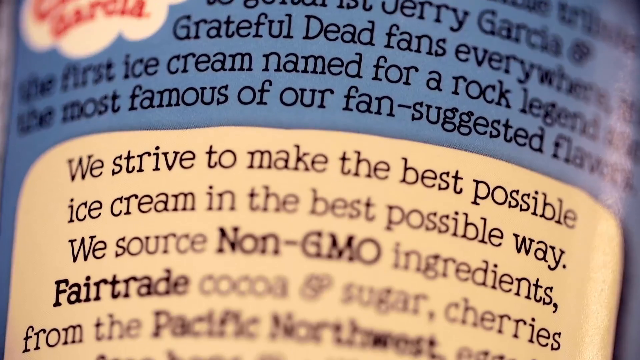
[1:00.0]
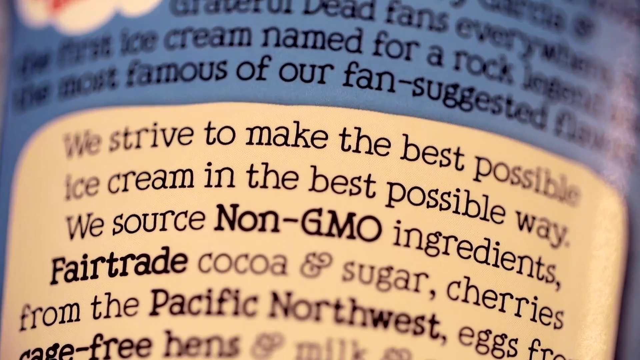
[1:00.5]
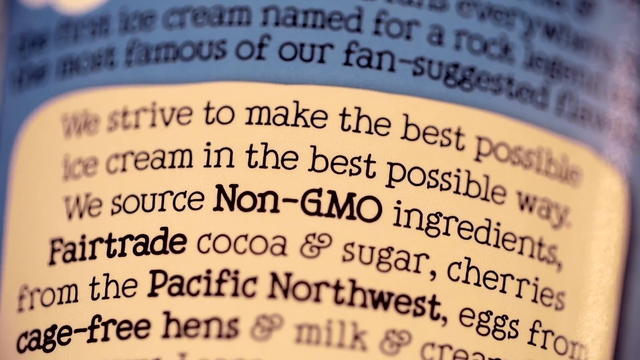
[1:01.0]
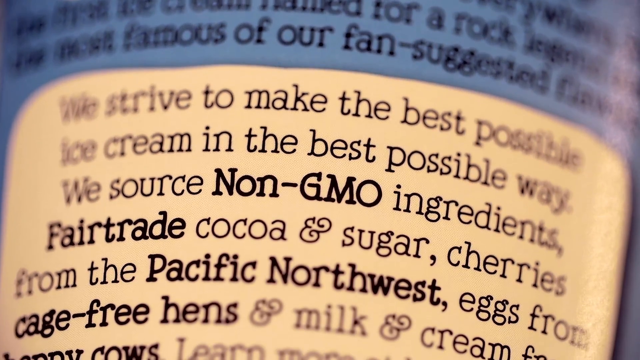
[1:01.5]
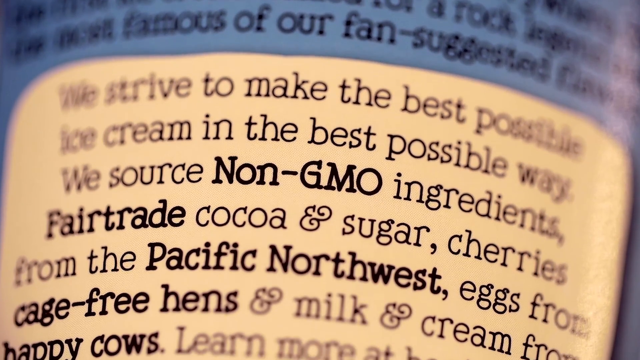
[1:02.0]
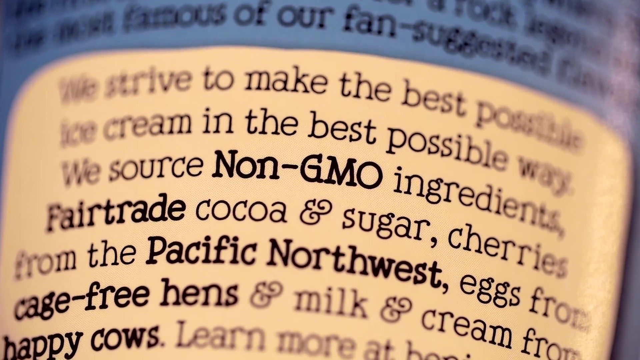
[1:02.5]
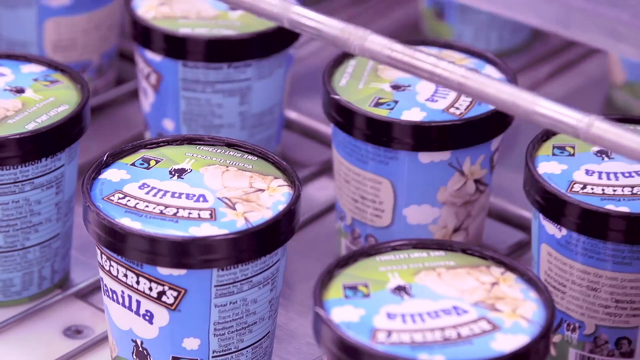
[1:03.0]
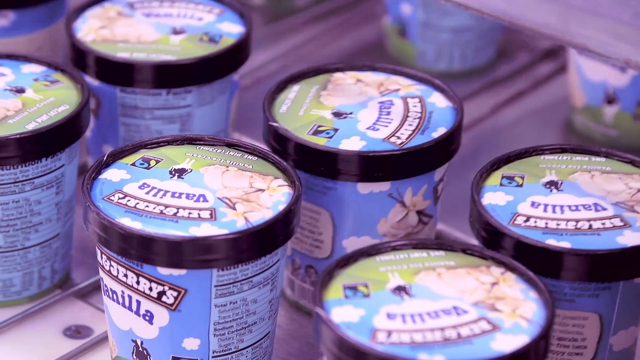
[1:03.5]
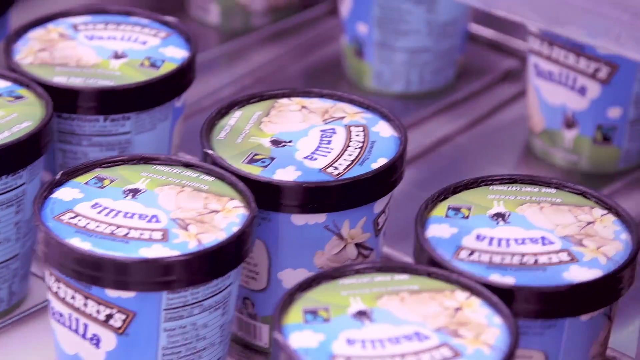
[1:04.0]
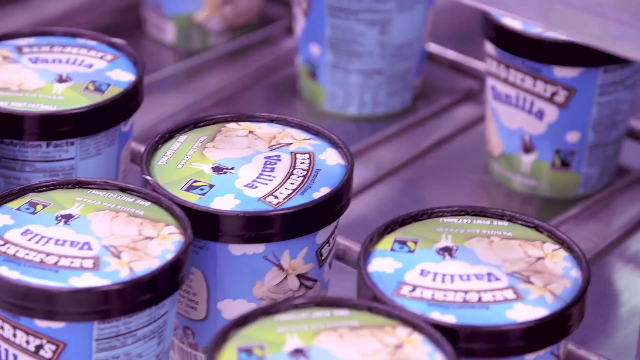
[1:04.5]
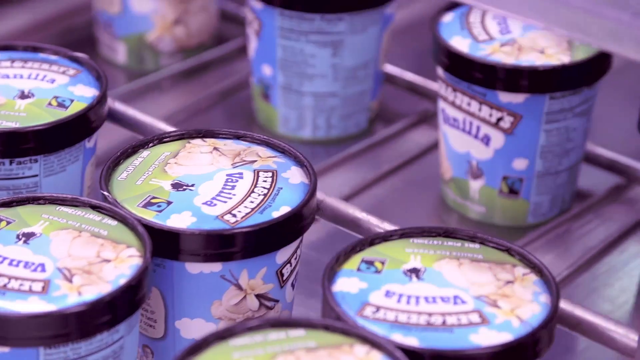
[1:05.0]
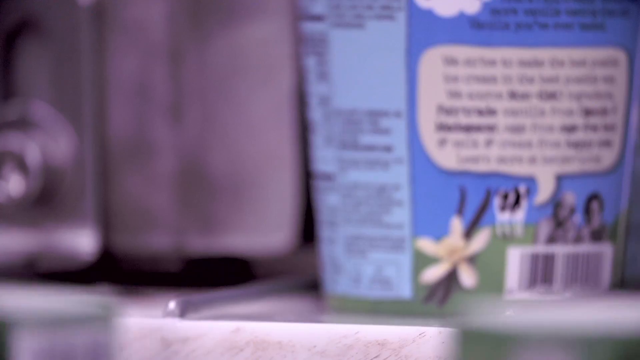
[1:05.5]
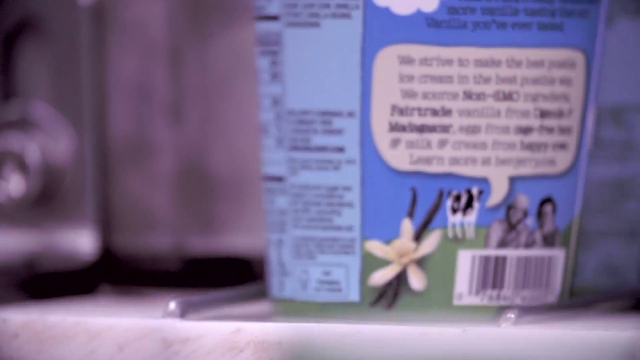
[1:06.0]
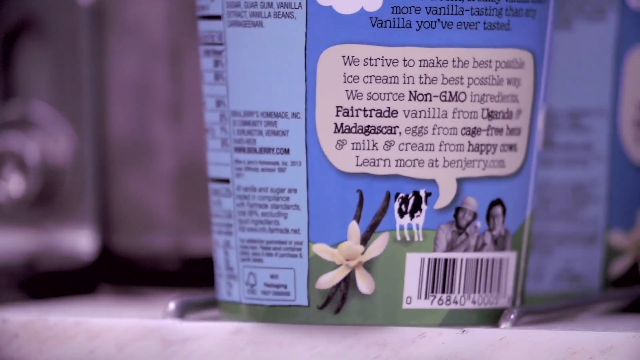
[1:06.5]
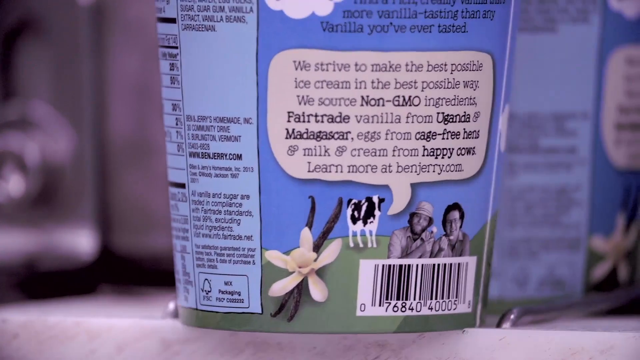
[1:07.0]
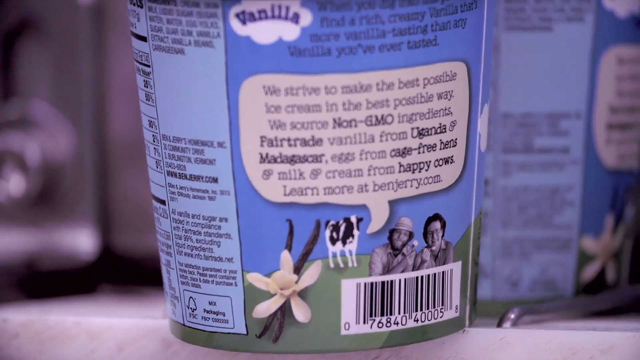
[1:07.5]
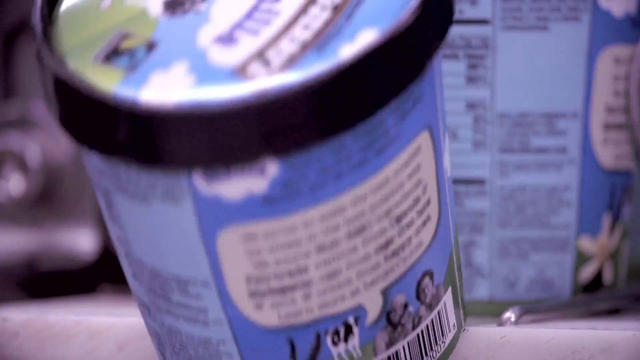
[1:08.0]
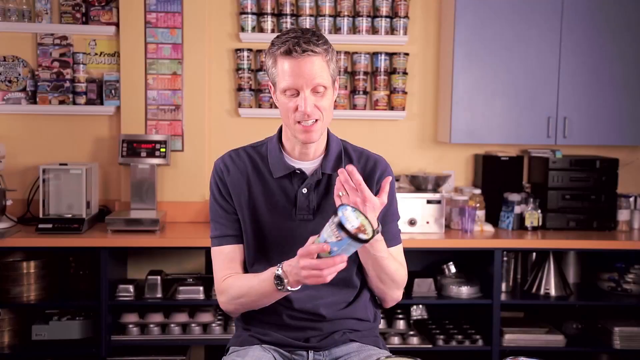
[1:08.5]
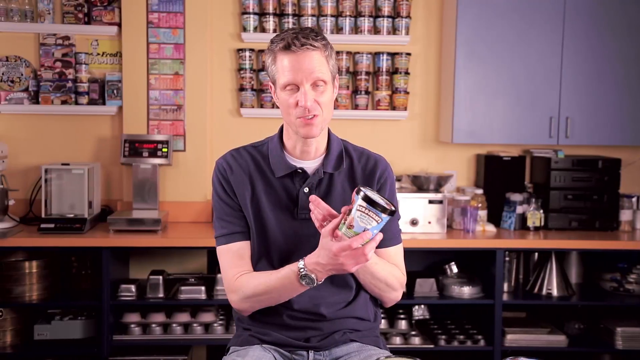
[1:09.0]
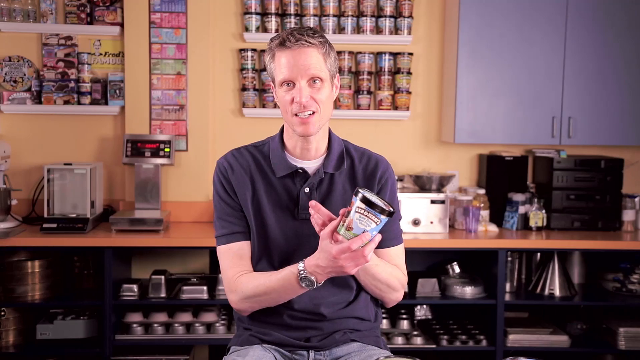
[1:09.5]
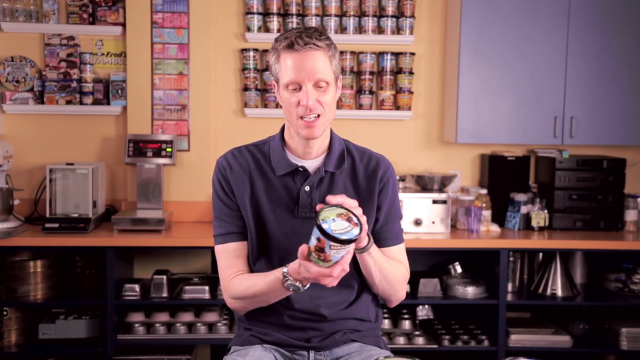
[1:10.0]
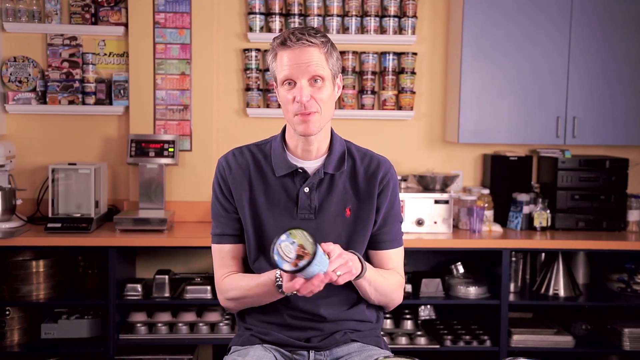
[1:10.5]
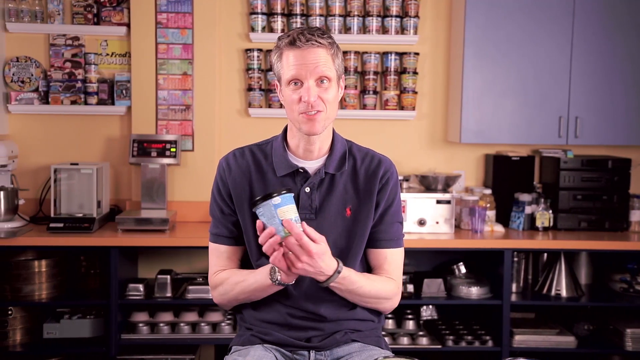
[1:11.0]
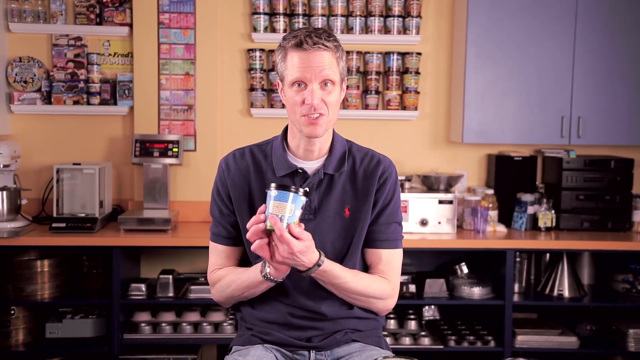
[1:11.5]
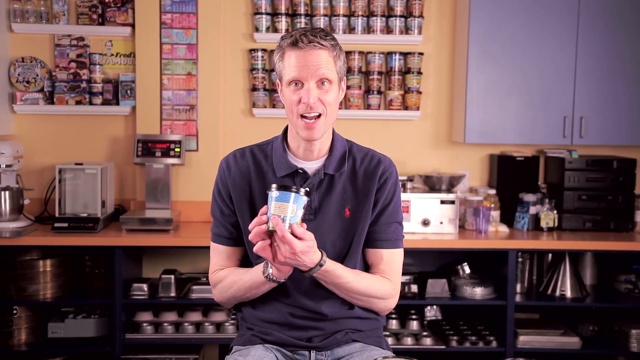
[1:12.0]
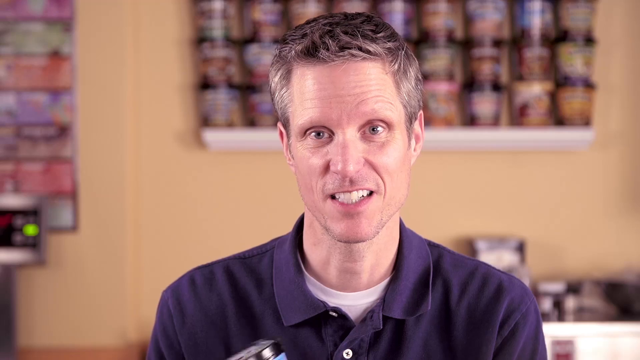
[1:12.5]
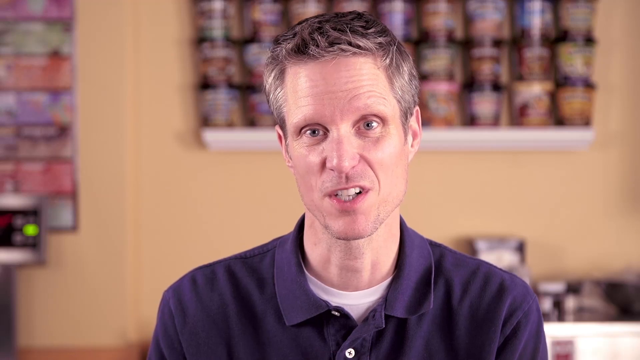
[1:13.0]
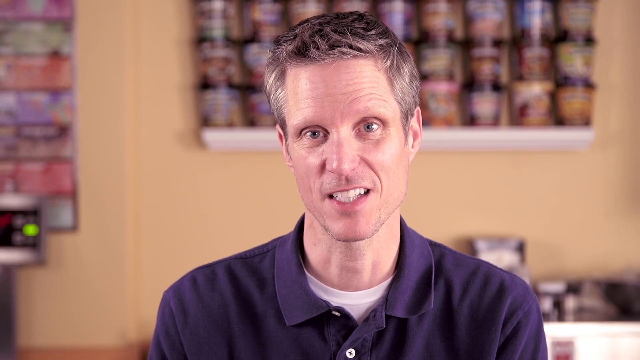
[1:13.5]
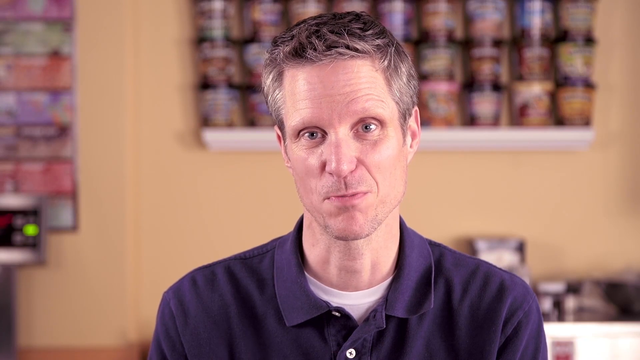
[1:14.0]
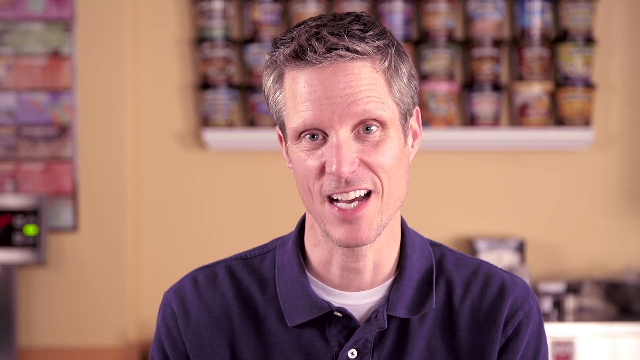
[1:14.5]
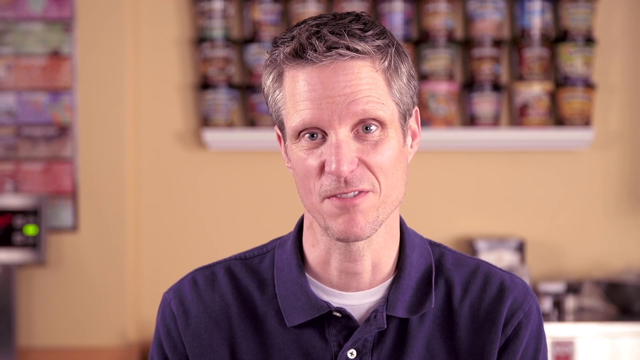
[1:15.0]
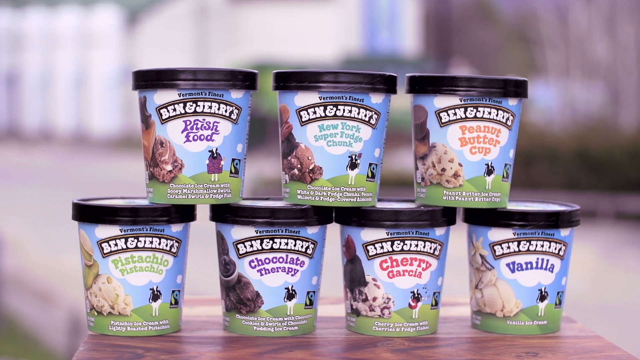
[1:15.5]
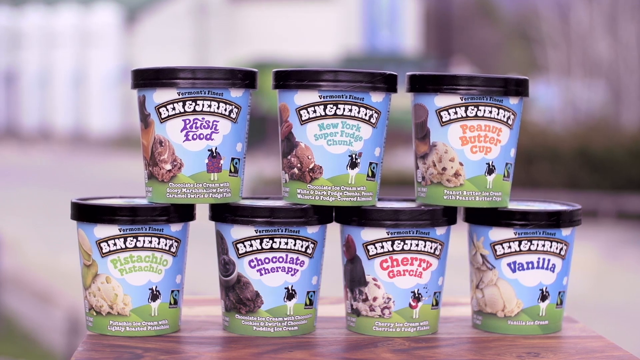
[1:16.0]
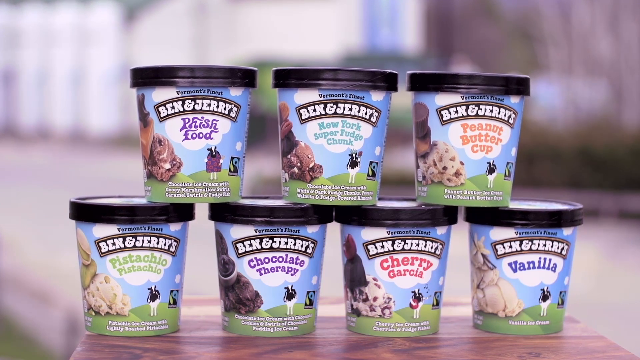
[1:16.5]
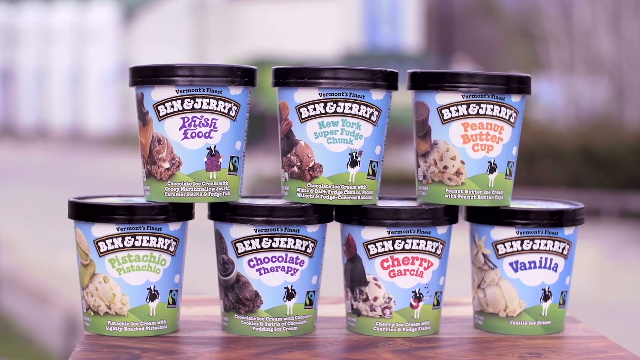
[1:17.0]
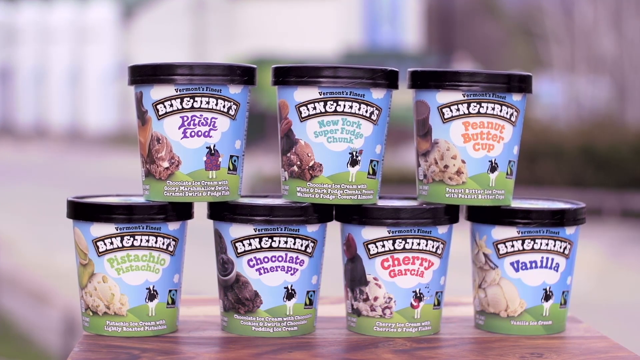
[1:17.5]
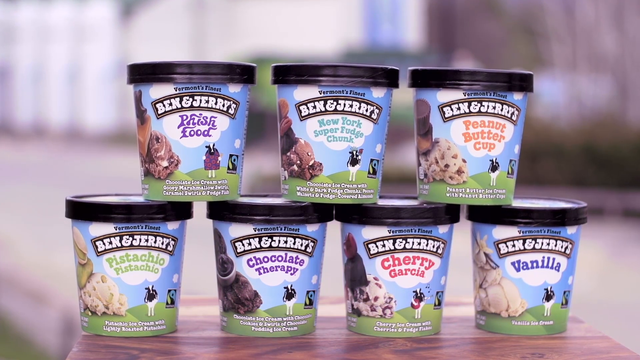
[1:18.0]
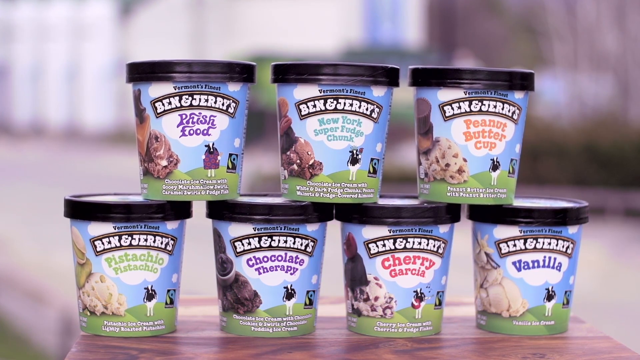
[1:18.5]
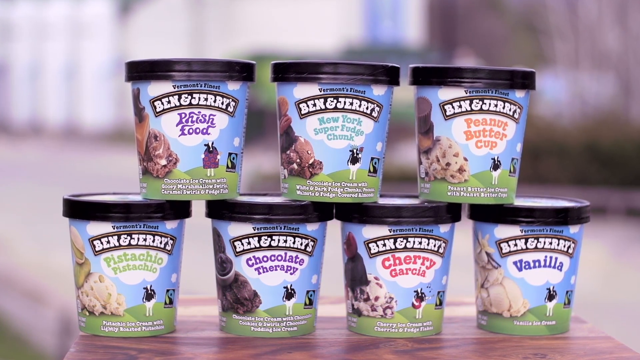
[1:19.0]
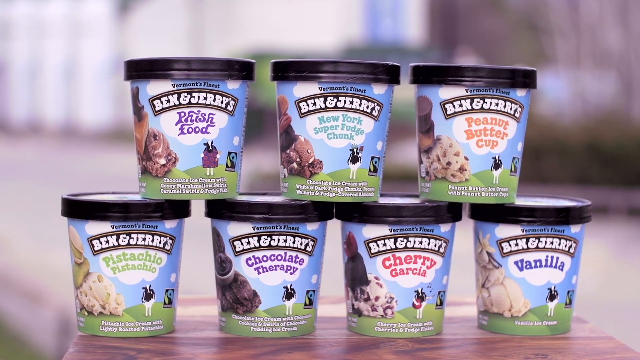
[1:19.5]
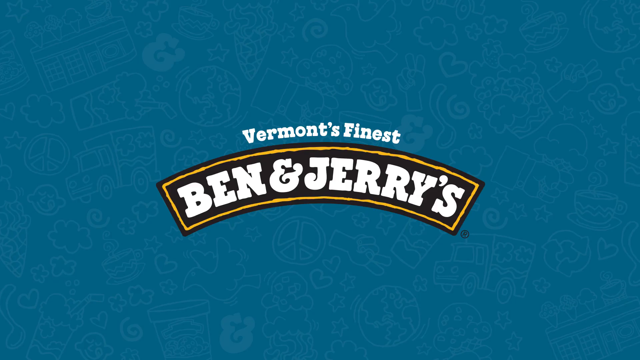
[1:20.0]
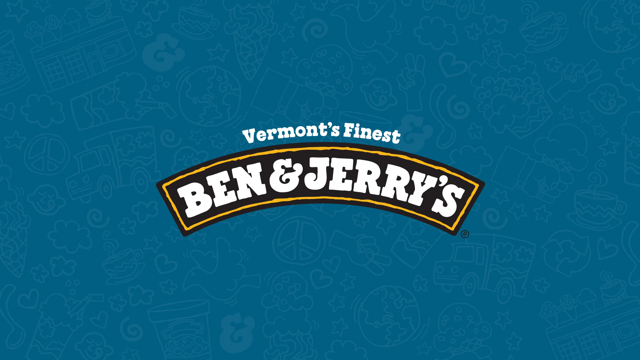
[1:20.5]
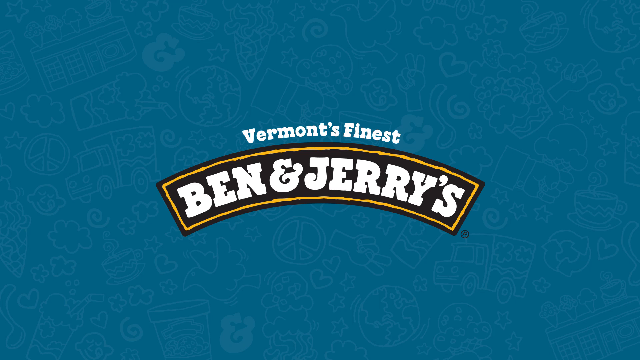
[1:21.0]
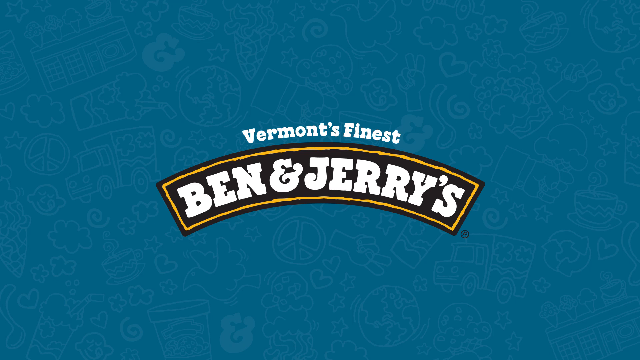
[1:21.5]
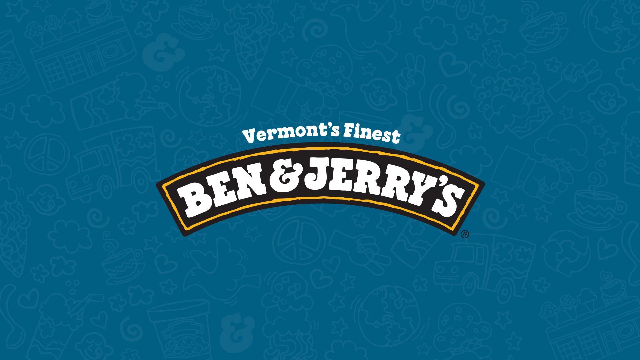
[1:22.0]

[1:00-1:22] A close-up shows the back of a pint of Ben & Jerry's ice cream. Part of the text is readable and part is not. The readable text says "grateful fans everywhere, first ice cream name for a rock legend, the most famous of our fans suggested flavors. We strive to make the best possible ice cream in the best possible way. We source non-GMO ingredients, fair trade cocoa and sugar, cherries from the Pacific Northwest, and eggs from the cage-free hens." The video then moves to factory production of Ben & Jerry's pints, where vanilla is being produced, the pints coming through in groups of three.